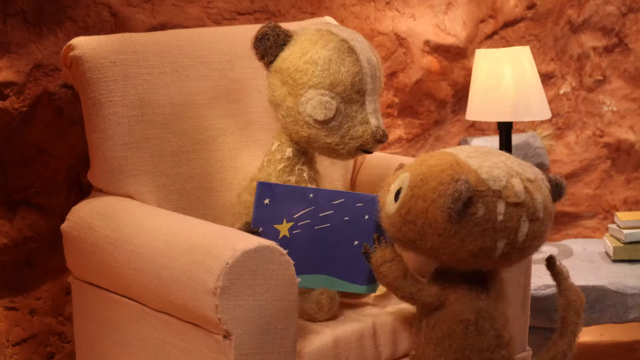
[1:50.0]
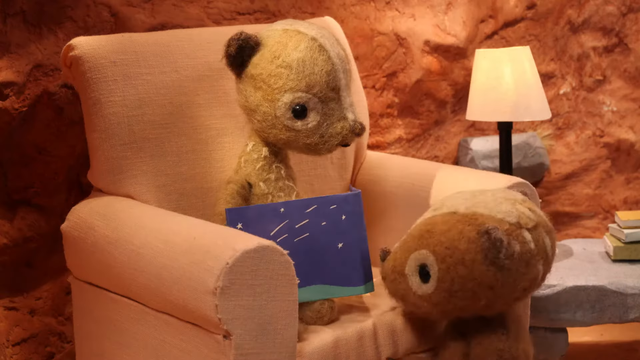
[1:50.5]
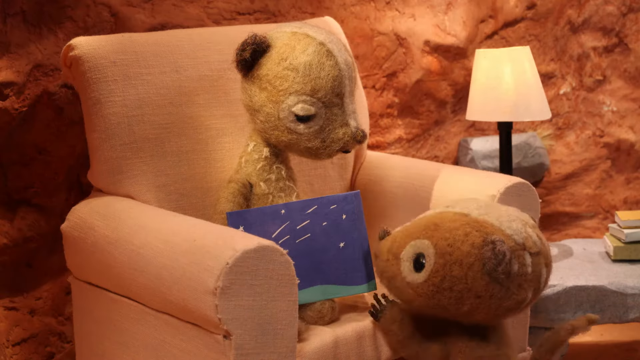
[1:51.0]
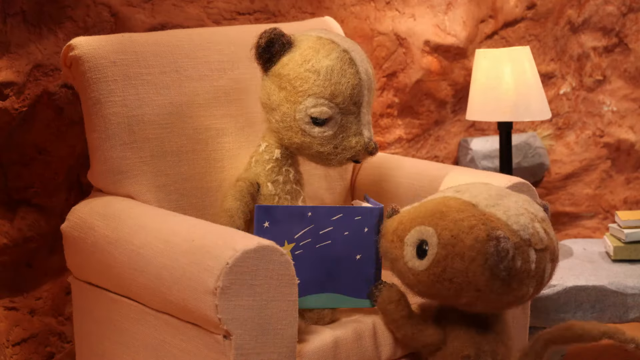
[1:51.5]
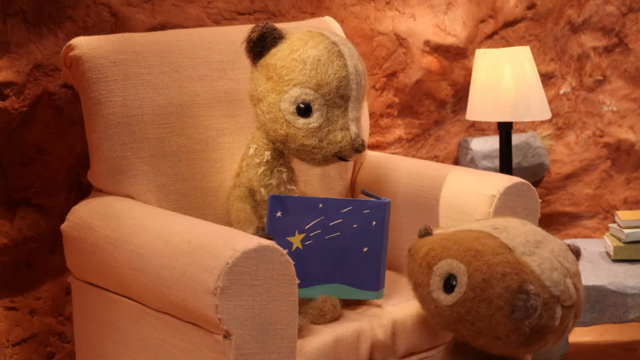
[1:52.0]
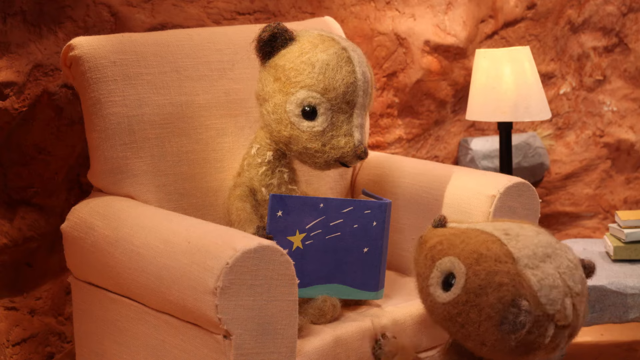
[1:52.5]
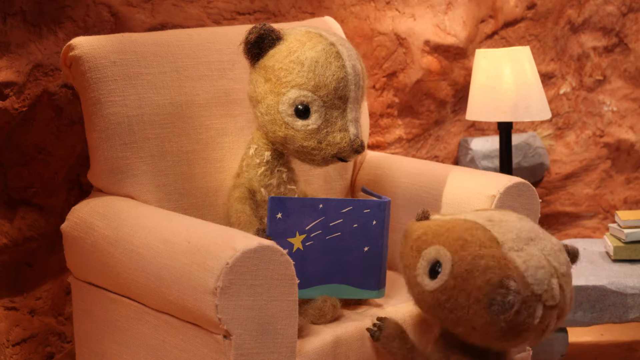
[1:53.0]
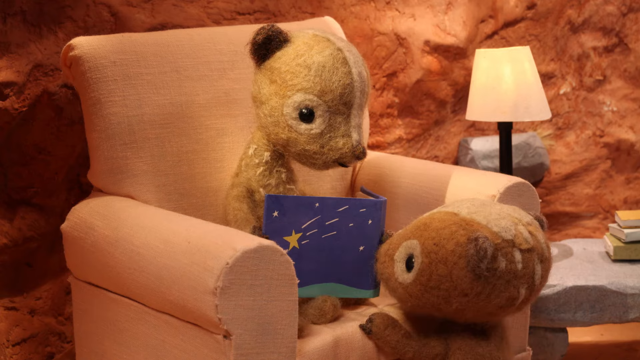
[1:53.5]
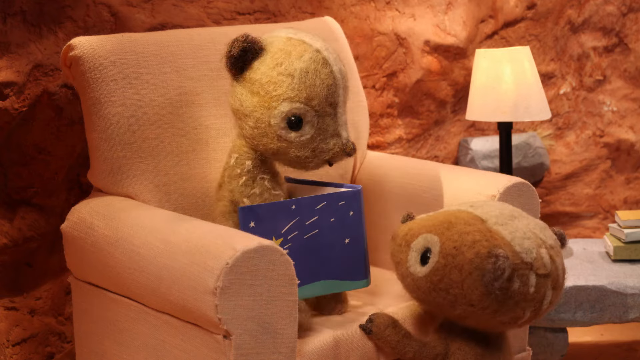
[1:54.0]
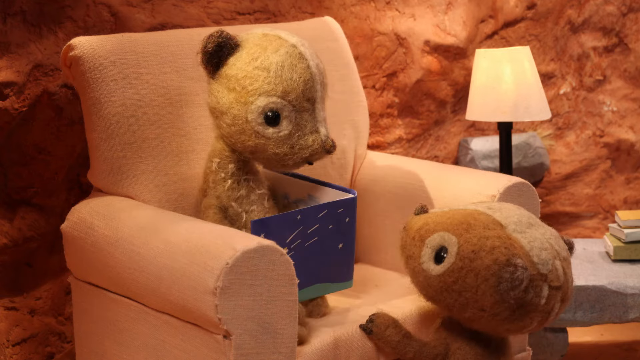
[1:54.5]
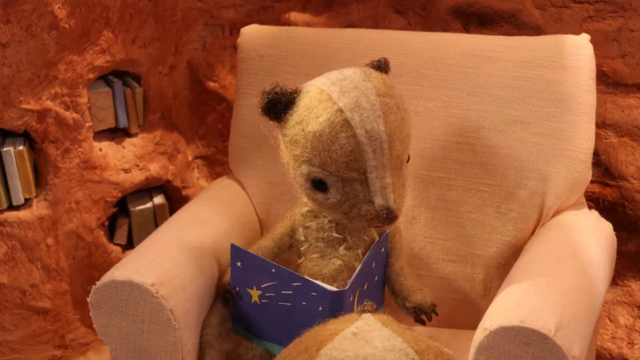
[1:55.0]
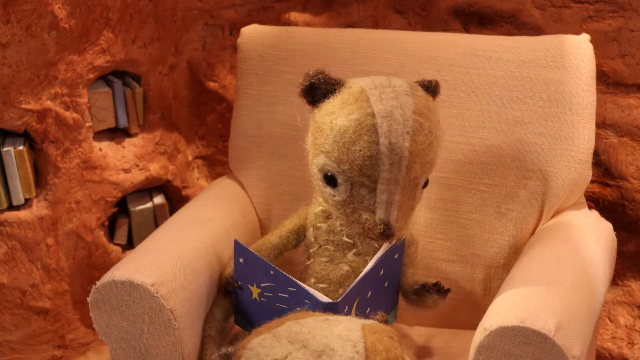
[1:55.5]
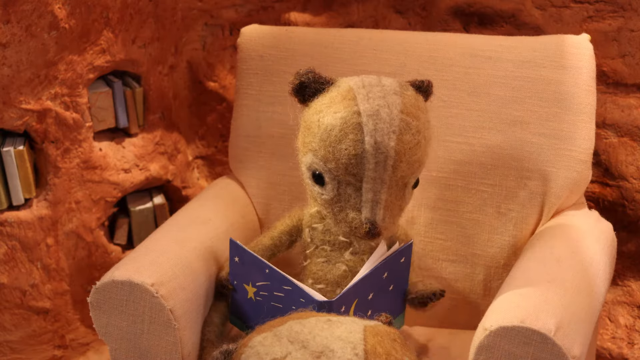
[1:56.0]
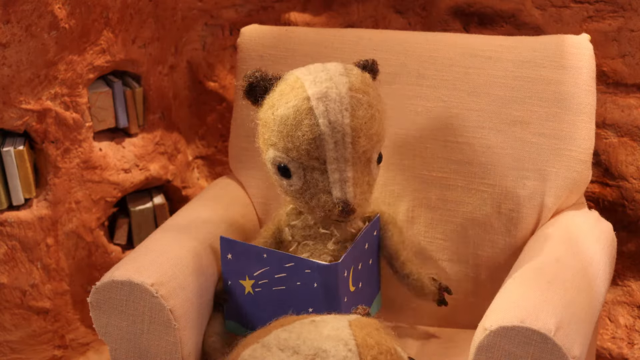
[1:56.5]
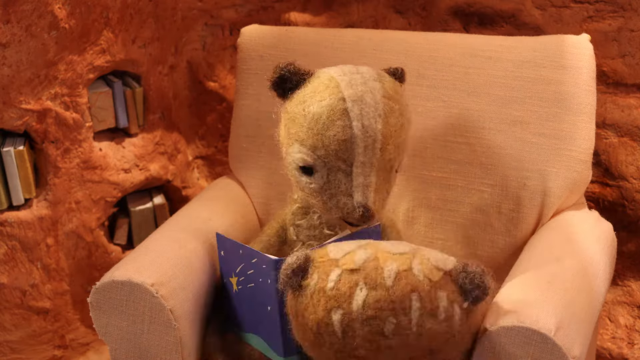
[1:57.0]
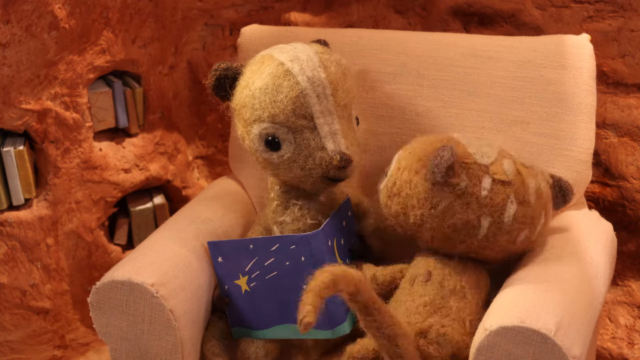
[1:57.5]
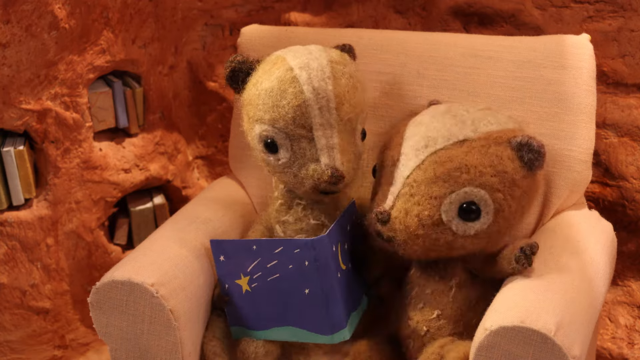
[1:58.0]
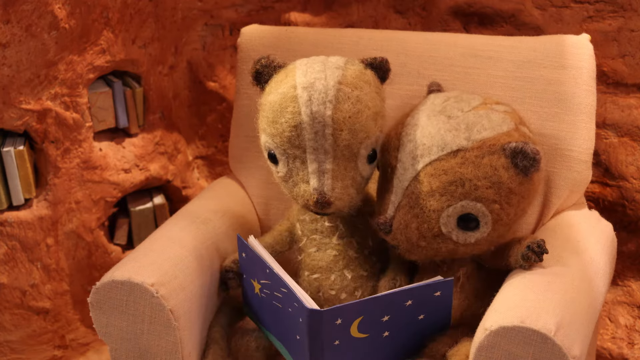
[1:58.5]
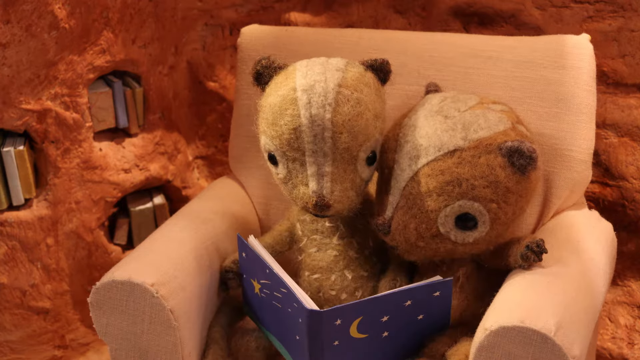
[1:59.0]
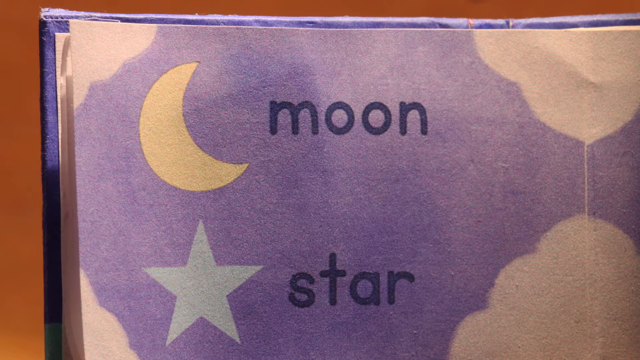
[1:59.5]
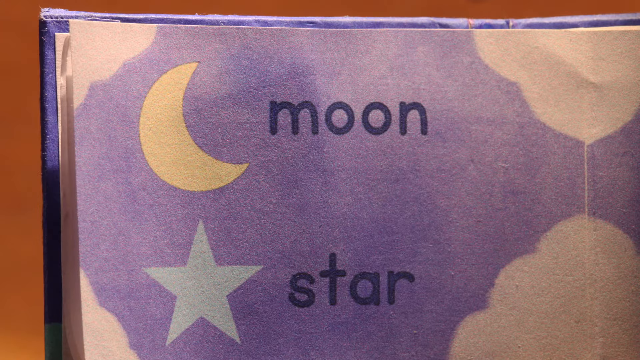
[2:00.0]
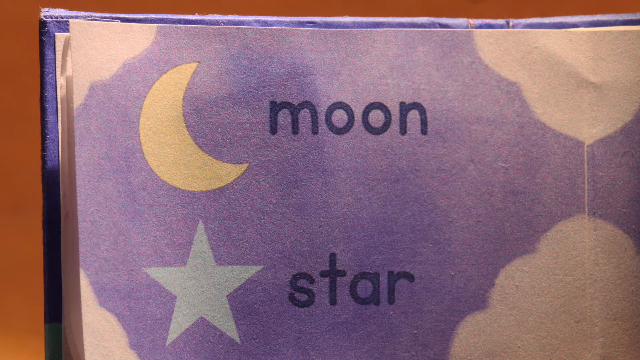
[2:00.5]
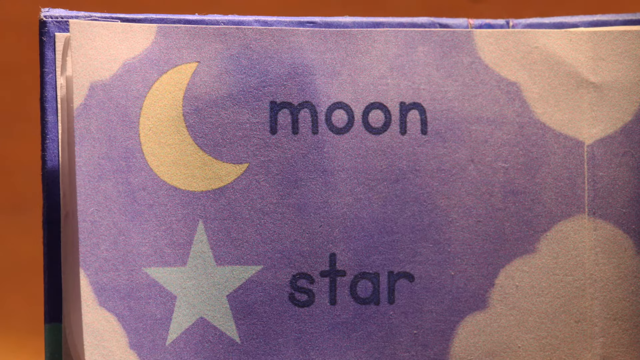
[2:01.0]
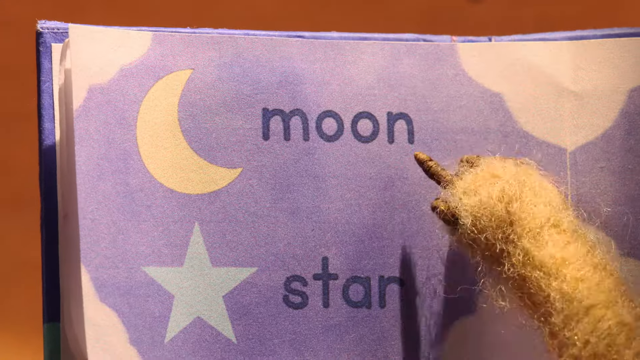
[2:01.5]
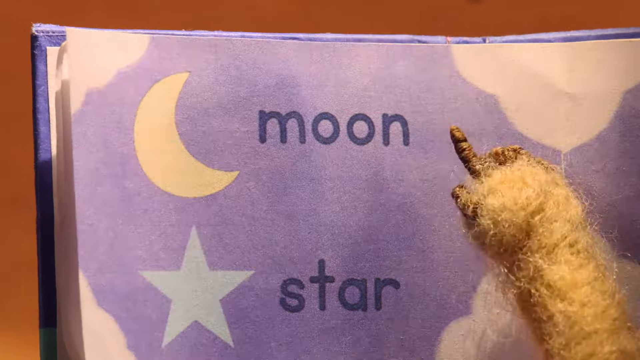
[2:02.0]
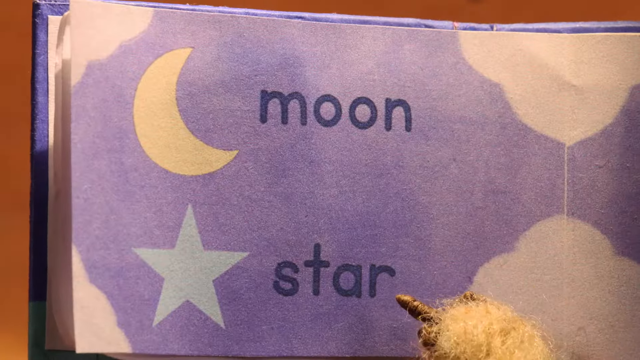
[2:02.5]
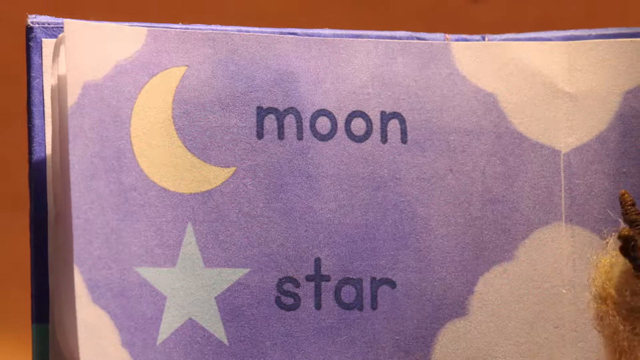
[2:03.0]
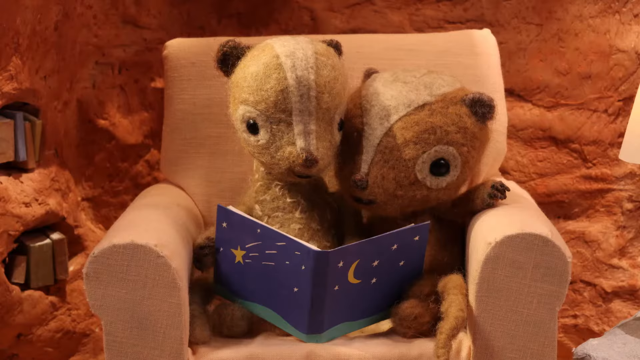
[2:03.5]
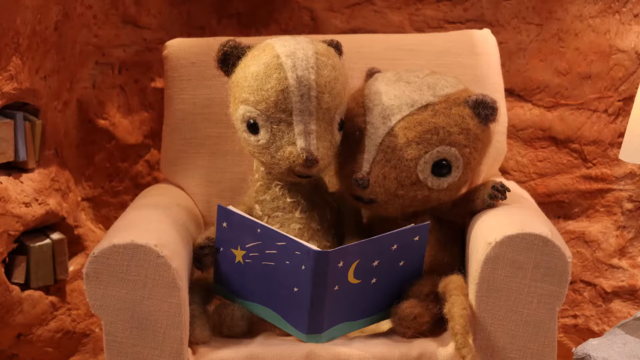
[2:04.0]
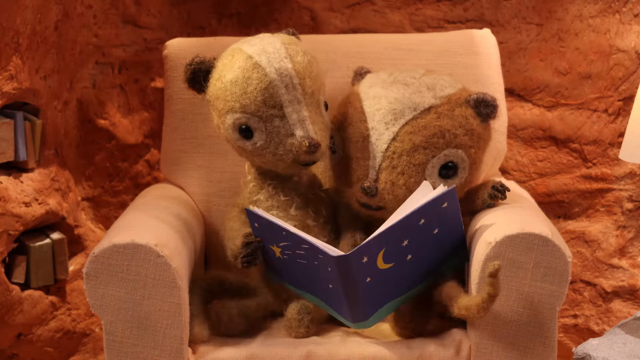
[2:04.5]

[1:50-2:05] Two animated squirrels are in a kind of rock layer. One sits on a cushion chair holding a blue book with stars and a moon on it, while a smaller squirrel below tries to grab the book but cannot. The seated squirrel pats the chair beside him, and the other squirrel comes and sits right next to him on the soft chair, and they read the book together. A view inside the book shows "moon" in blue letters with a yellow moon to its left, a white star below, and "star" in blue letters to its right, with clouds and a sky in the background. A squirrel's arm reaches up and does a little painting or writing on the page.